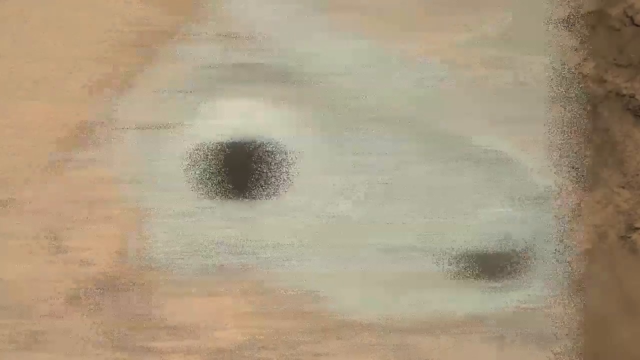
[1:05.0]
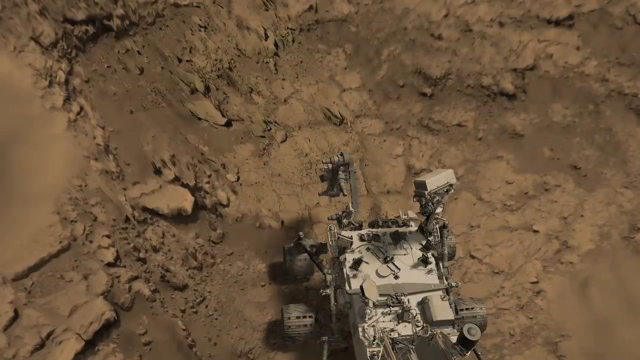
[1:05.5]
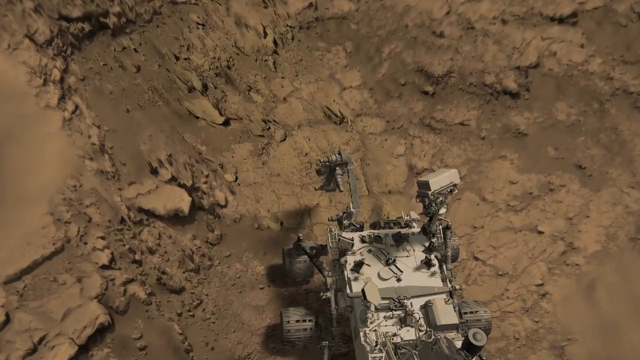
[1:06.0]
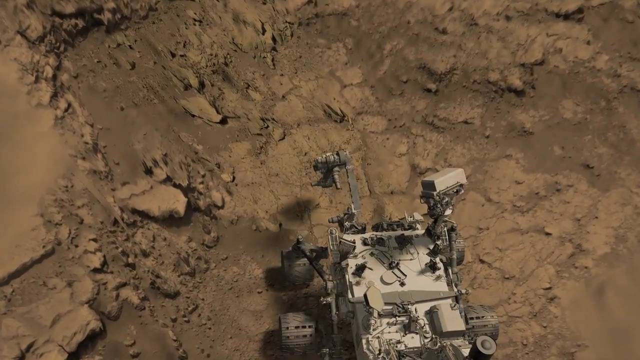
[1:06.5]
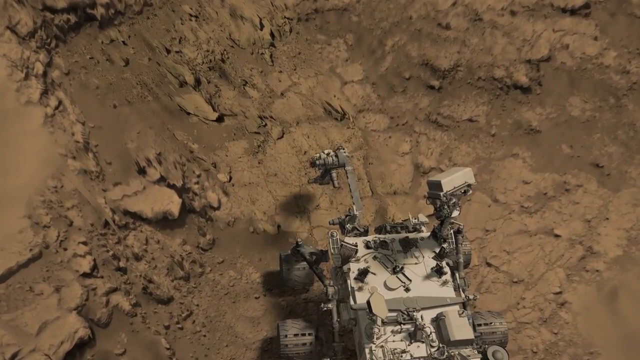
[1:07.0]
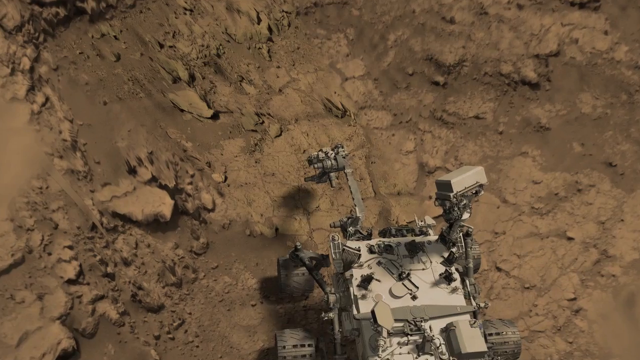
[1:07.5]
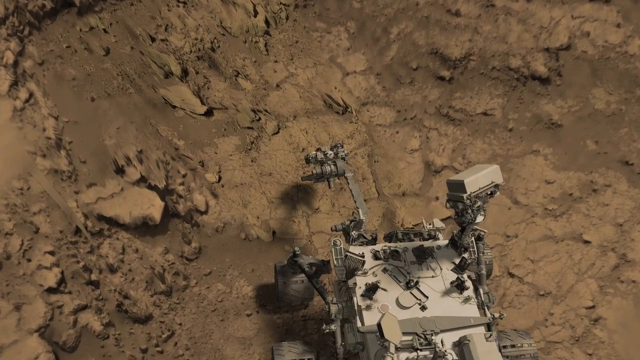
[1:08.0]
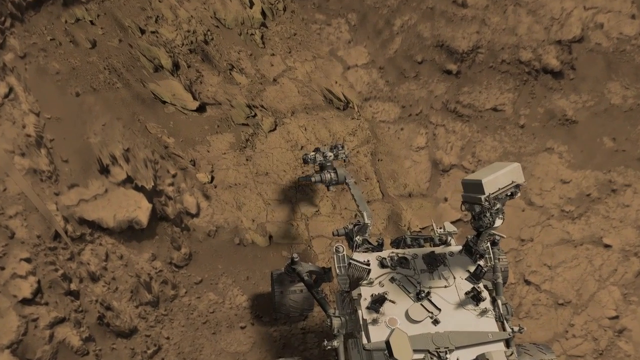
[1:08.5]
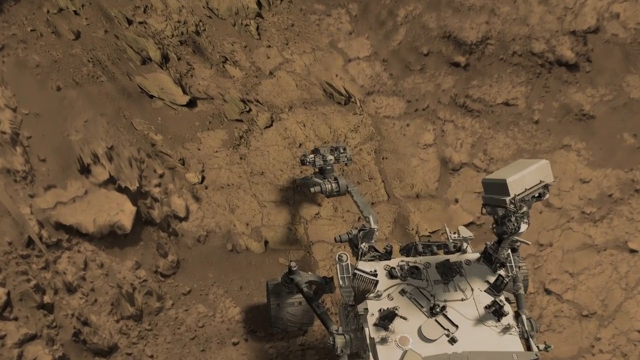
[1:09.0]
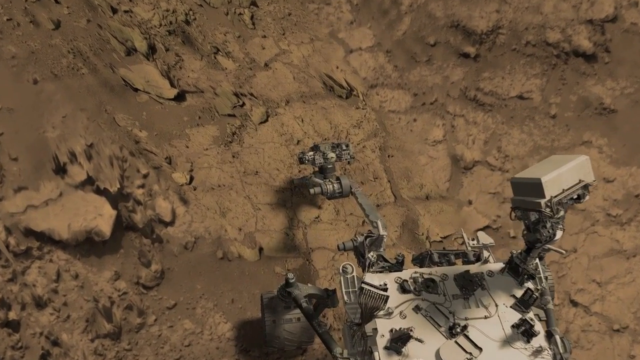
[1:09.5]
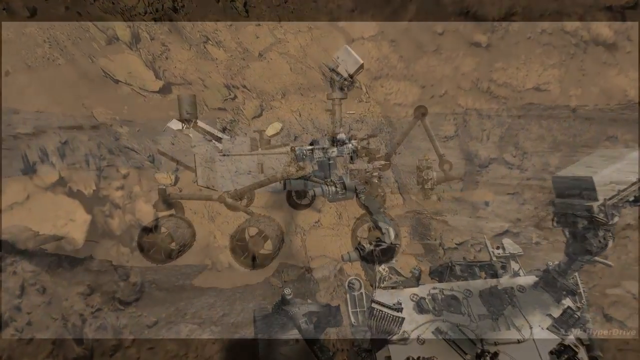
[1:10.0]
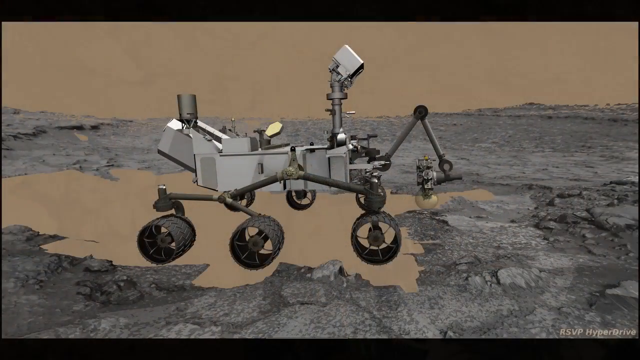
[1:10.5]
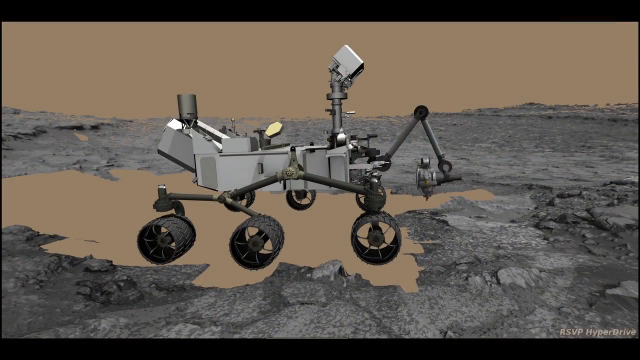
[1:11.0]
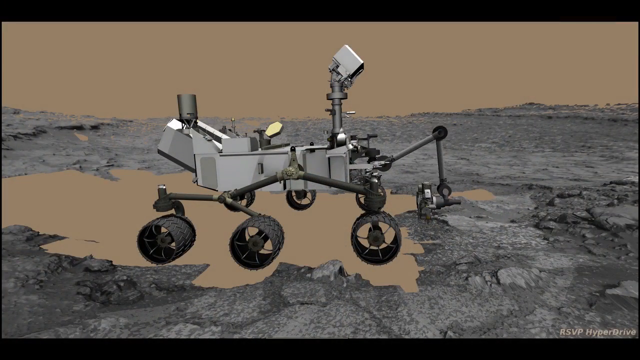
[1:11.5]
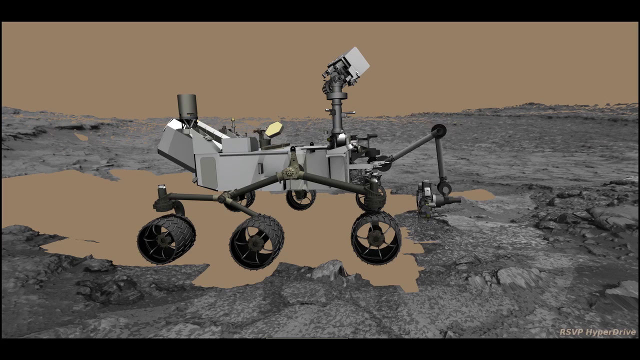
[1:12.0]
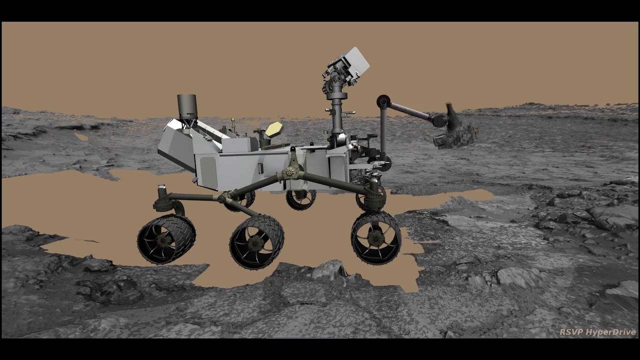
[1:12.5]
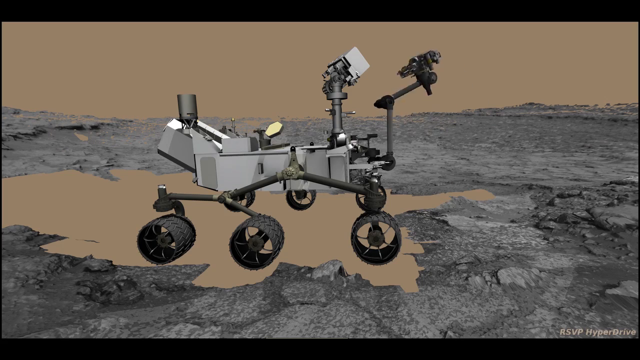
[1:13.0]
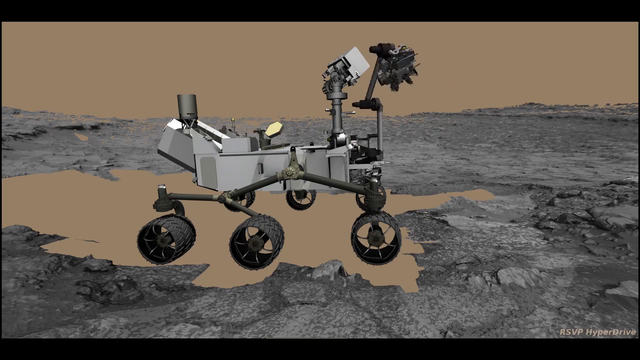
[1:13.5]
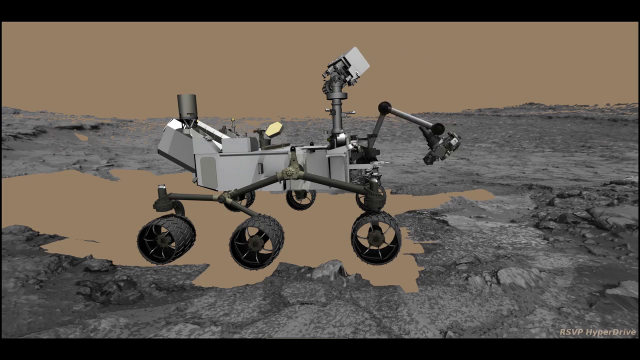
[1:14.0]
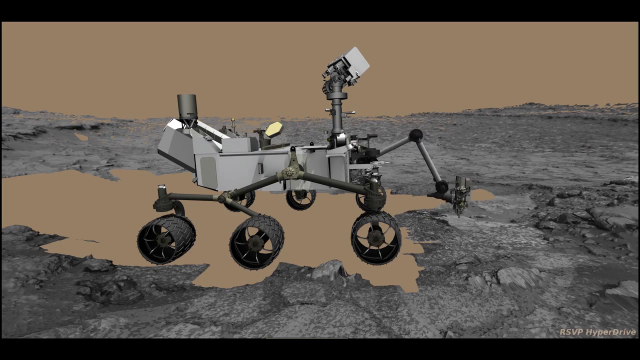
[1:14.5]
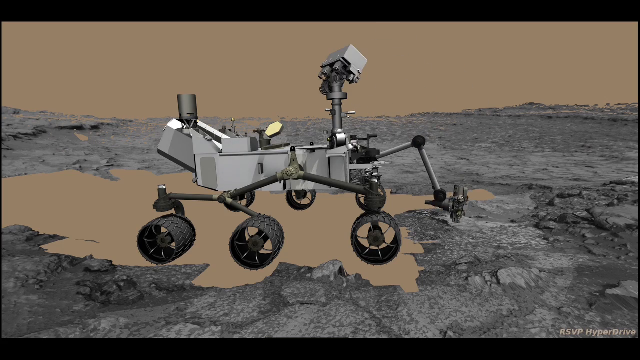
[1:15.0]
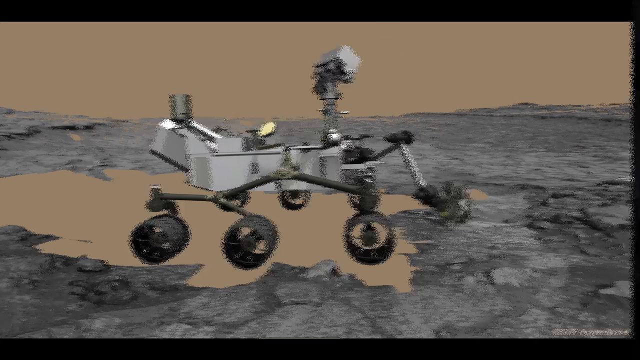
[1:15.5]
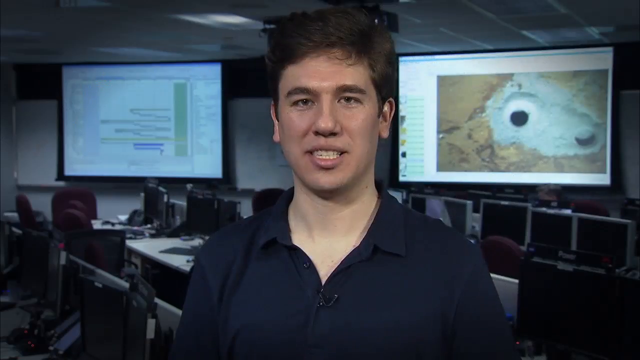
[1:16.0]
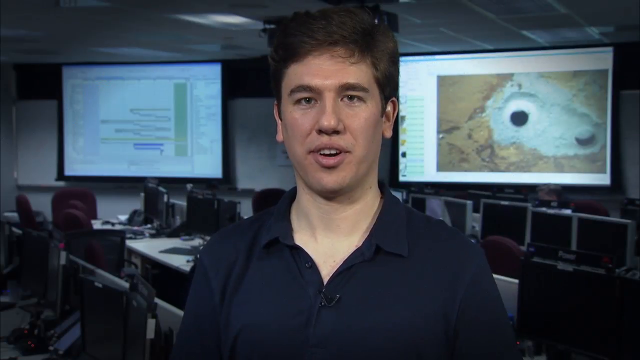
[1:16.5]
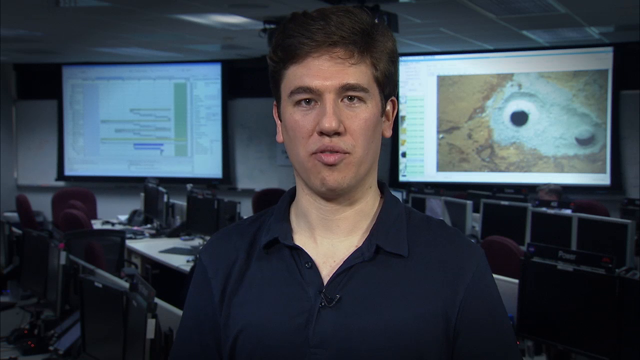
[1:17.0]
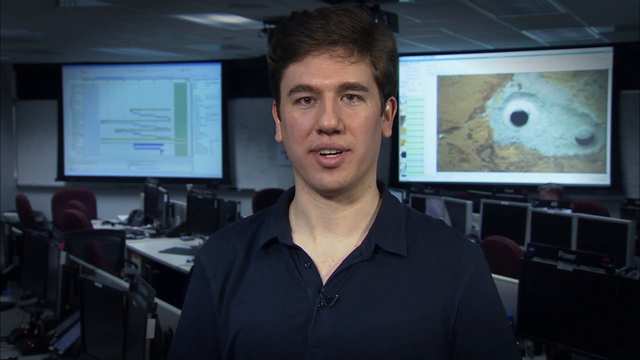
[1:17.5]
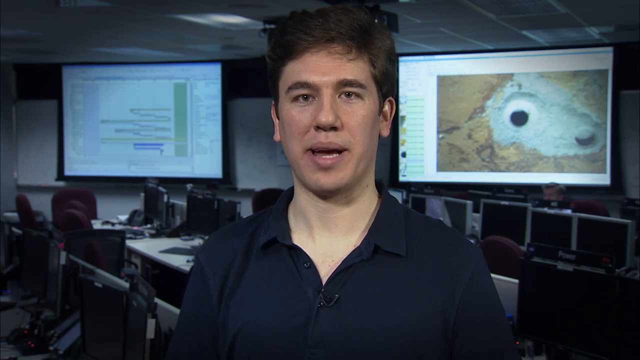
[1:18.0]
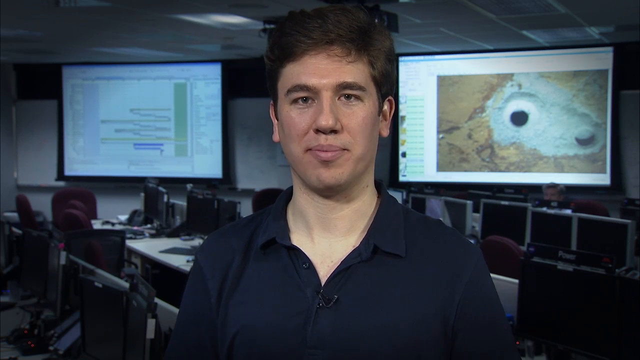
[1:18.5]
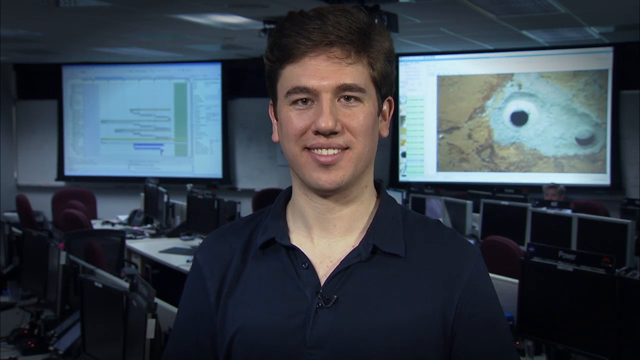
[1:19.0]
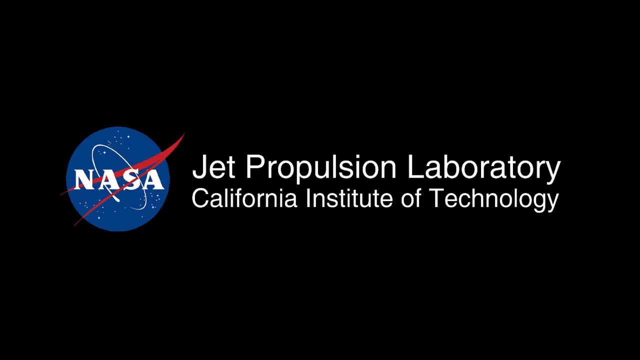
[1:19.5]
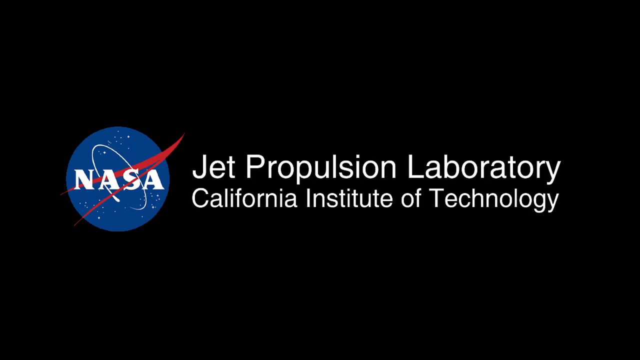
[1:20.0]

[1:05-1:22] Another view shows a rover on the surface. It has six wheels and looks capable of quite a bit of off-roading. A drill-type apparatus comes off an arm on the front of the vehicle; the arm looks like it can raise, lower and swivel in all directions, and the video shows this off. The scientist appears again, talking. The scene then moves to NASA's Jet Propulsion Laboratory at the California Institute of Technology, where the rover is shown in action in a sped-up sequence: drilling, collecting samples, placing them into storage on itself, and going back in.